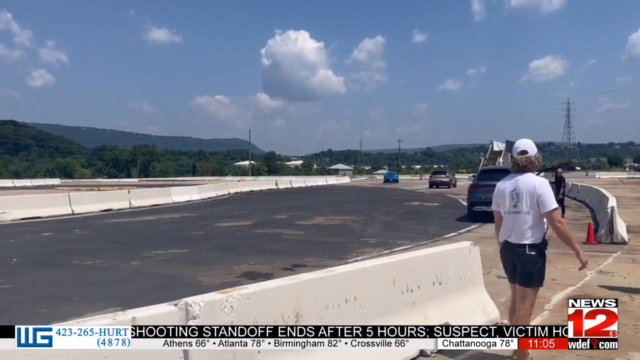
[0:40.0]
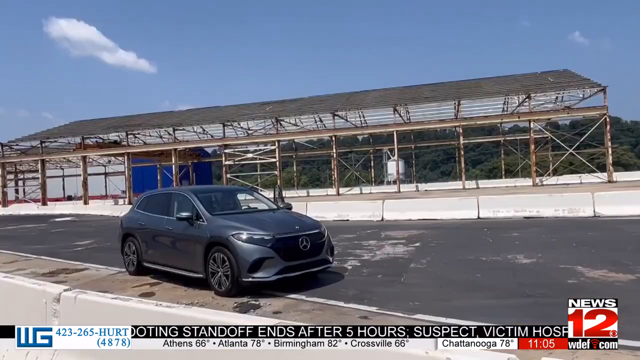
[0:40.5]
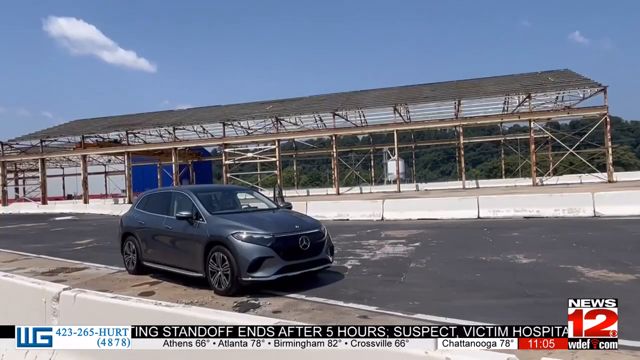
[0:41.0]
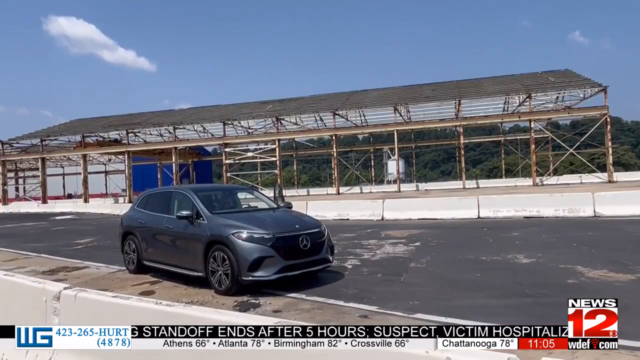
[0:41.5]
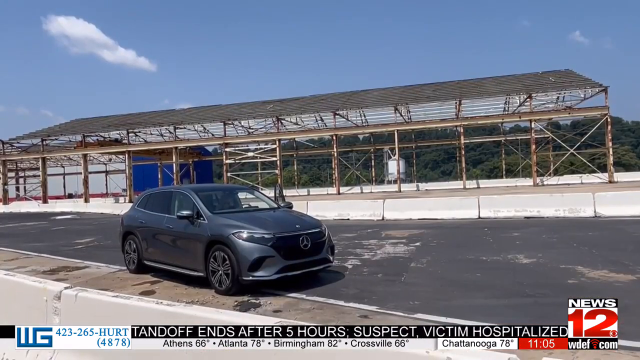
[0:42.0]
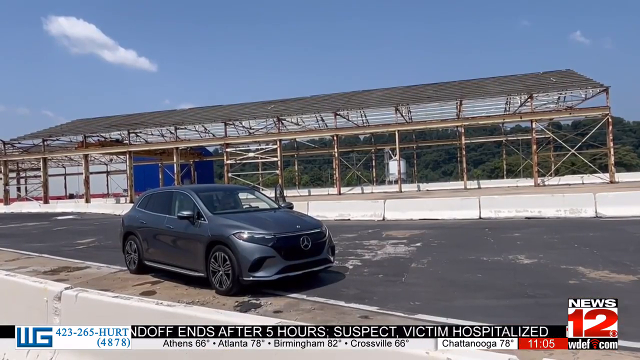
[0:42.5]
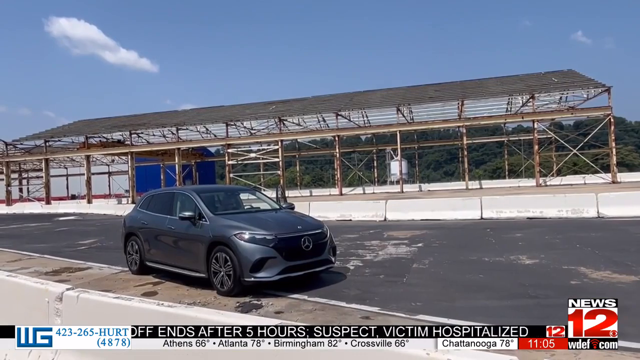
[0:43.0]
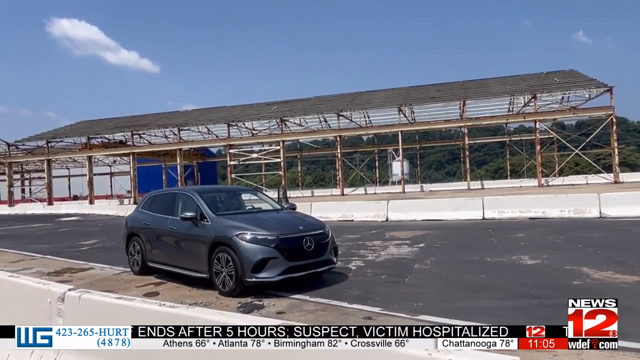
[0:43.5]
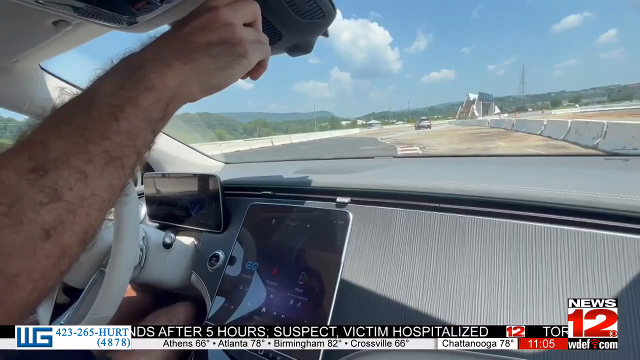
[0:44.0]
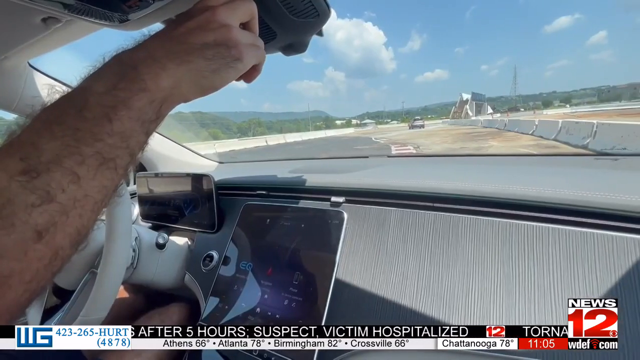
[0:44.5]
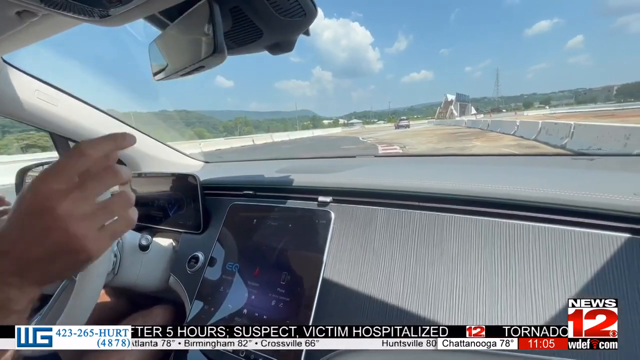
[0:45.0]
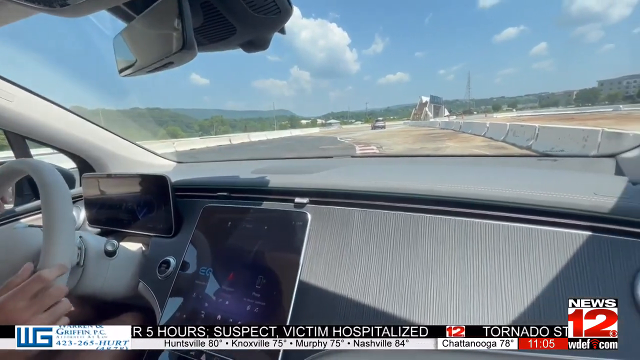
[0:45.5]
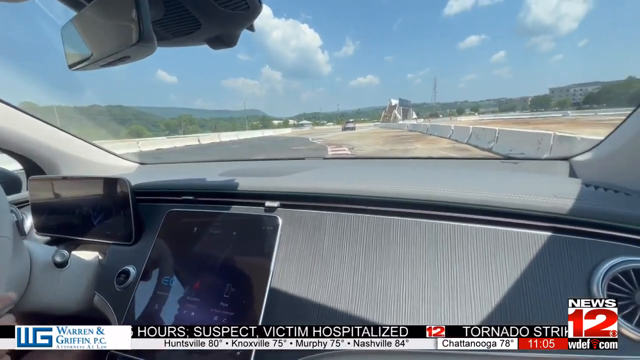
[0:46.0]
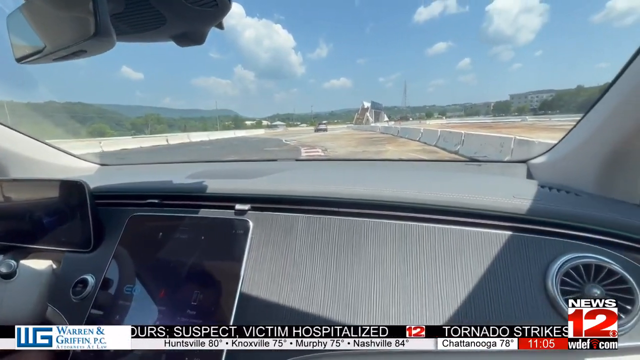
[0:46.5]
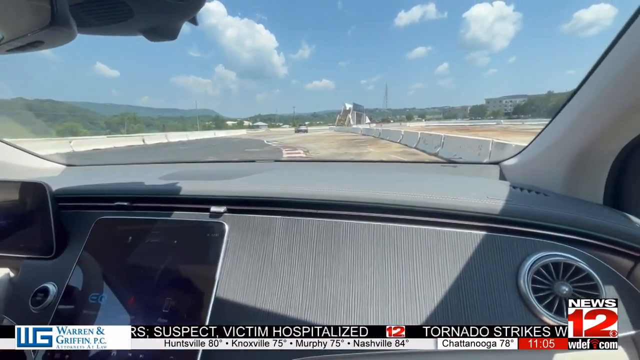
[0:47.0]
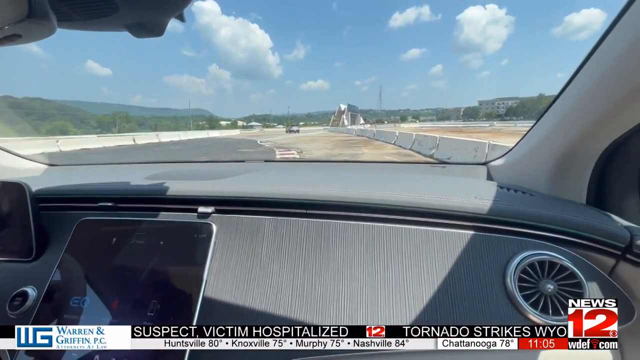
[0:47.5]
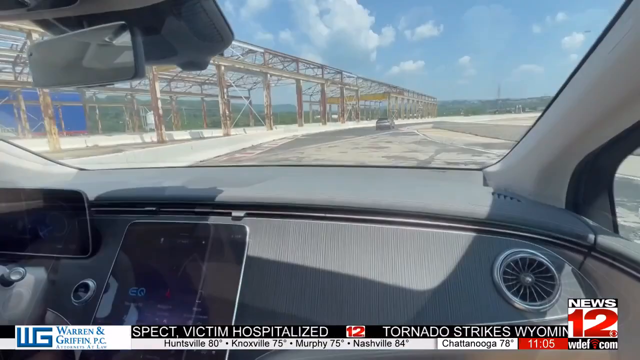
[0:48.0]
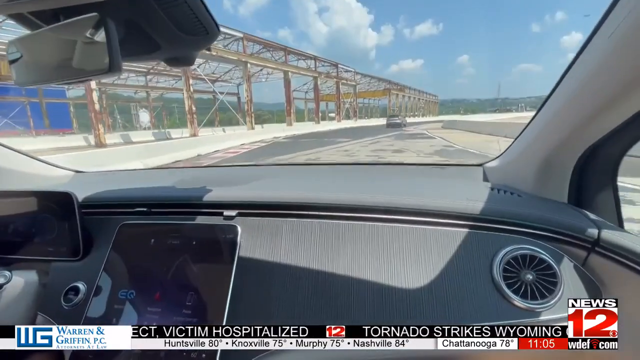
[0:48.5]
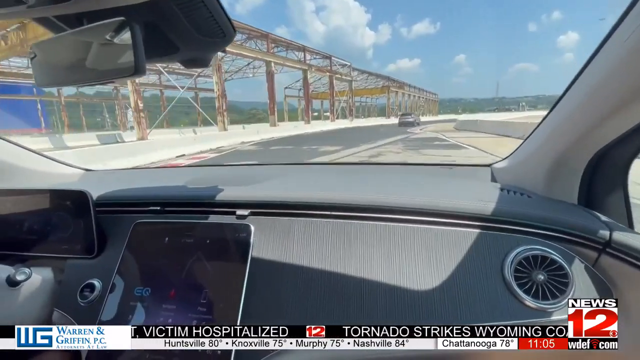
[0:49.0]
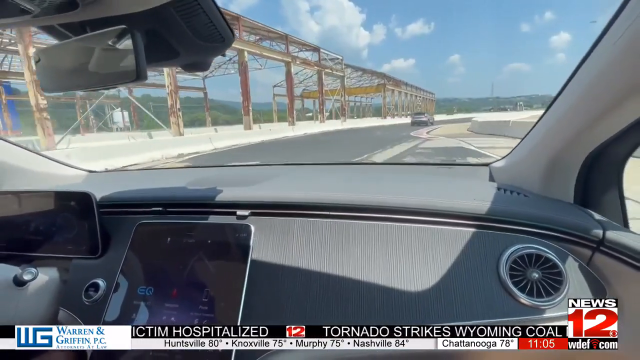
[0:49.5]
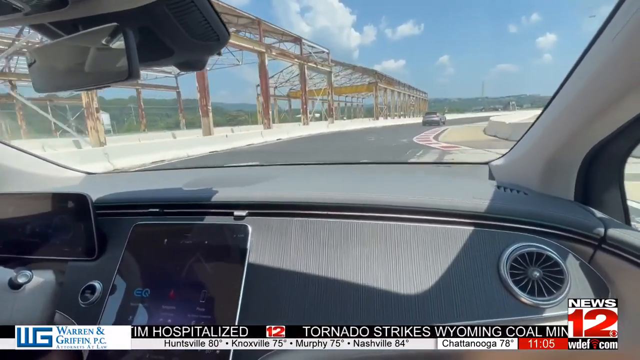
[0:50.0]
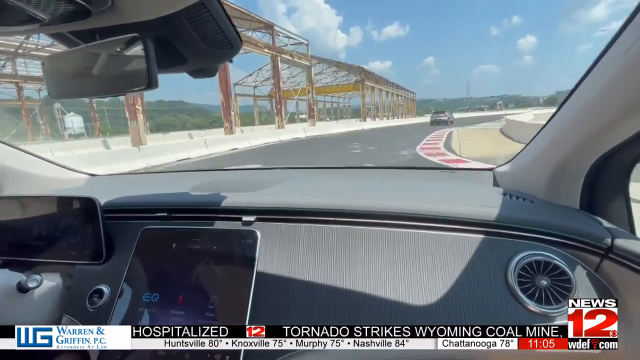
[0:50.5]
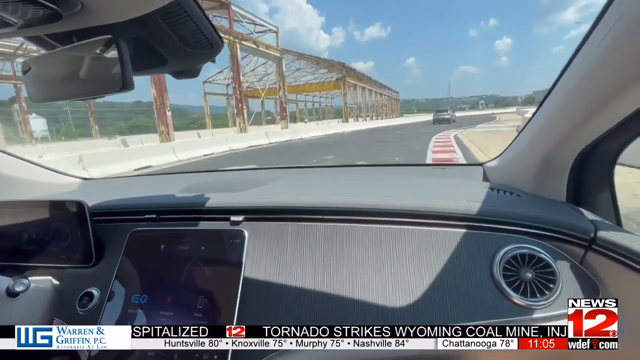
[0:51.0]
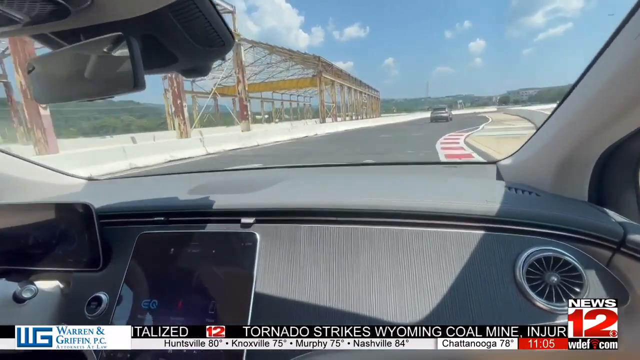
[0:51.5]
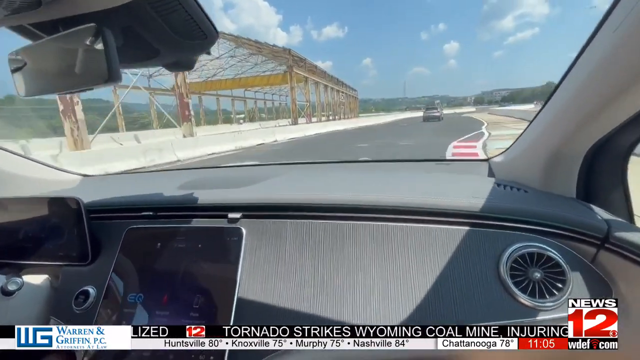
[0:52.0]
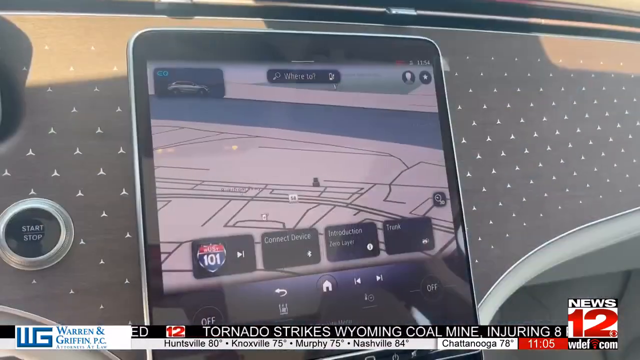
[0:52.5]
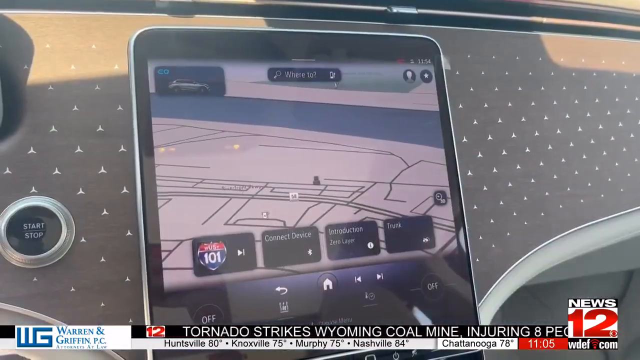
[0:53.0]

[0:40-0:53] A car, a Mercedes, is shown. A man gets in, adjusts the mirror, and takes off. The view follows him driving as if from inside the car, then pans out and back to where he started, showing the guy in a white t-shirt and white baseball cap, who seems to be possibly managing the track and working there. "News 12" appears at the bottom of the screen. Mountains are in the background, and there are cars on what apparently is a test track.